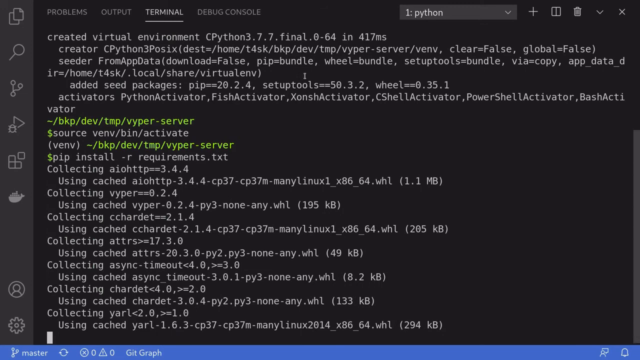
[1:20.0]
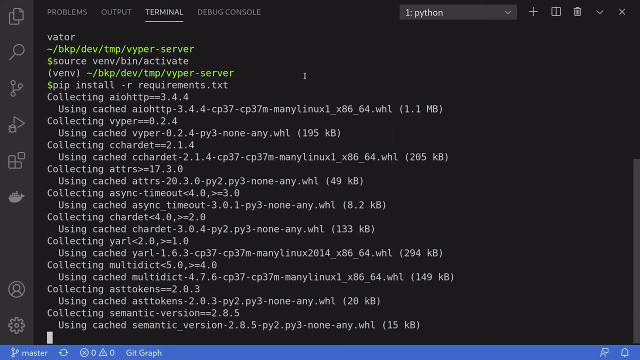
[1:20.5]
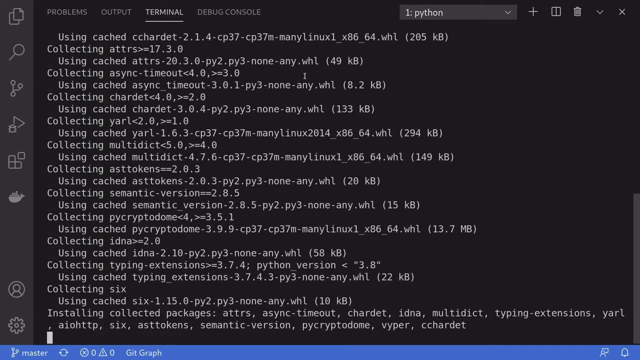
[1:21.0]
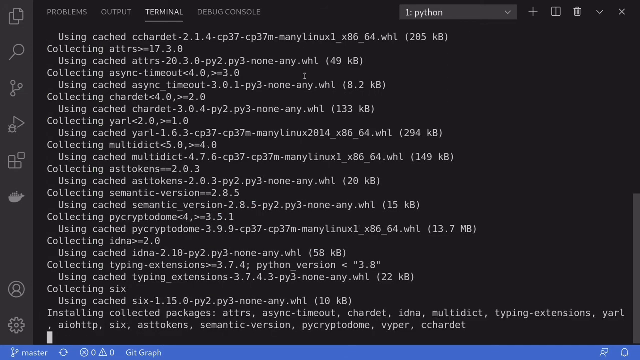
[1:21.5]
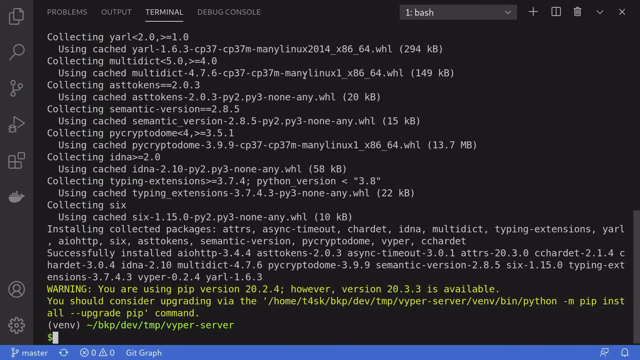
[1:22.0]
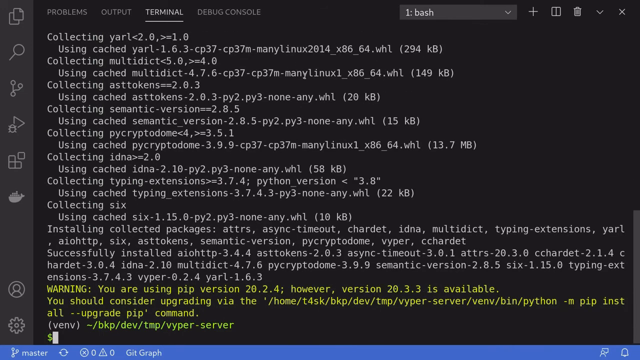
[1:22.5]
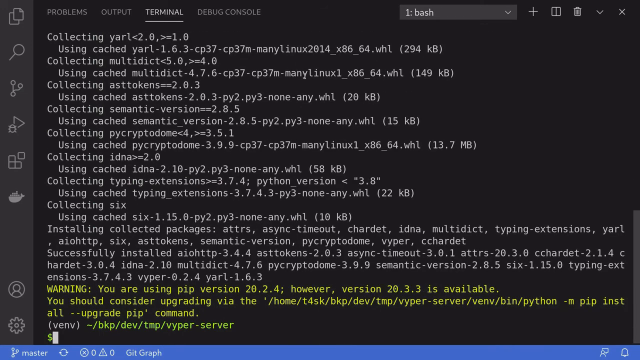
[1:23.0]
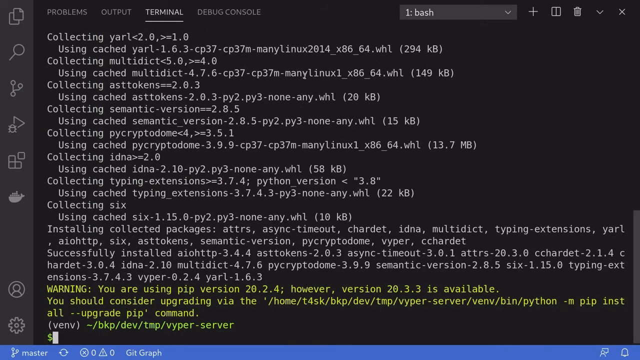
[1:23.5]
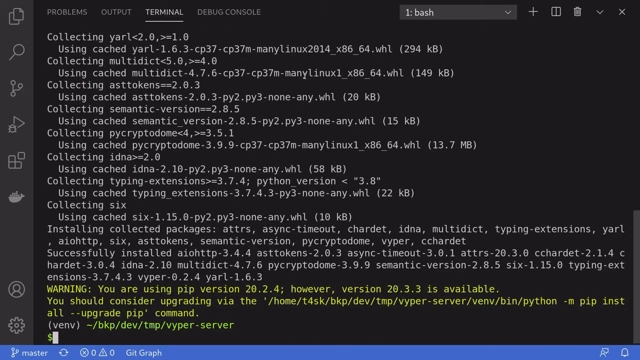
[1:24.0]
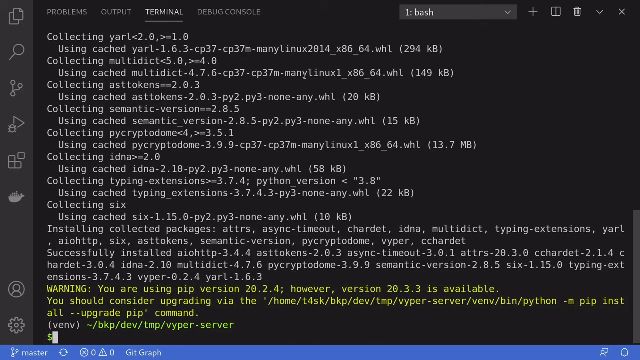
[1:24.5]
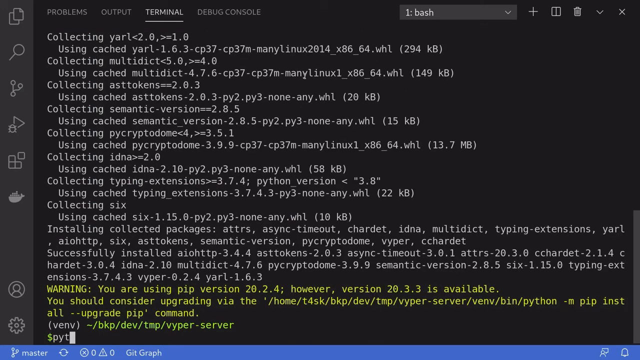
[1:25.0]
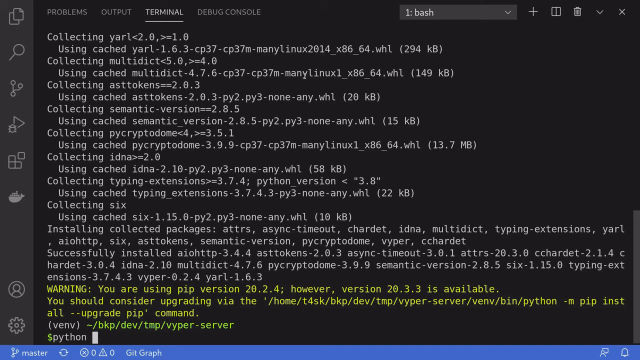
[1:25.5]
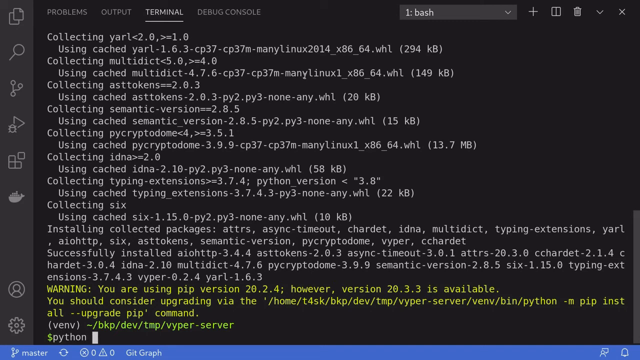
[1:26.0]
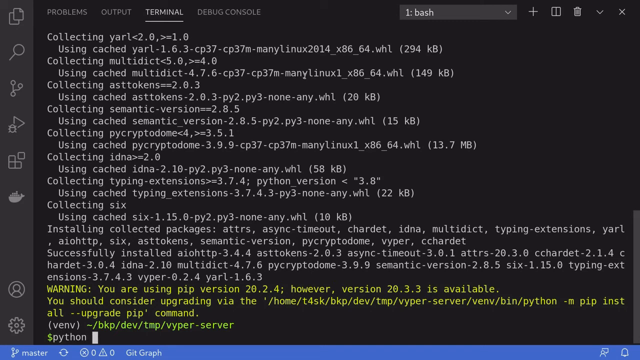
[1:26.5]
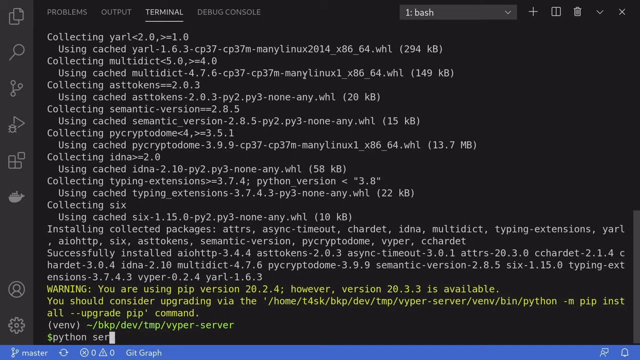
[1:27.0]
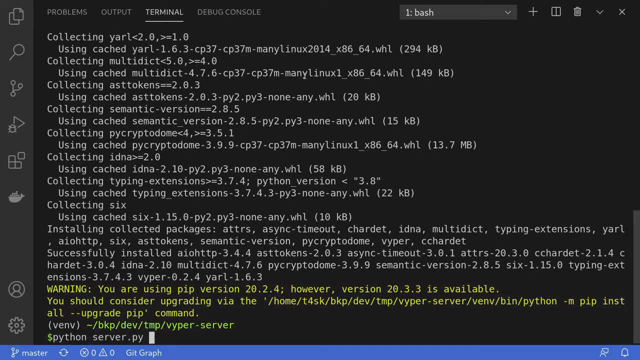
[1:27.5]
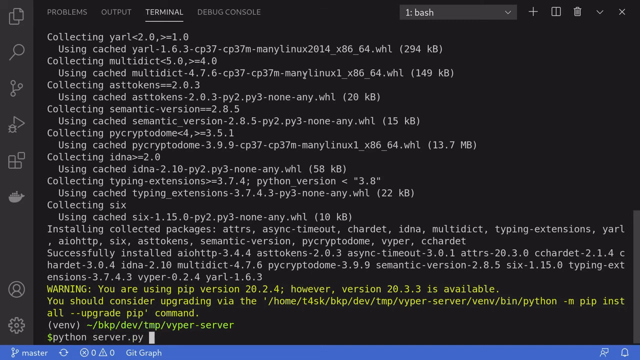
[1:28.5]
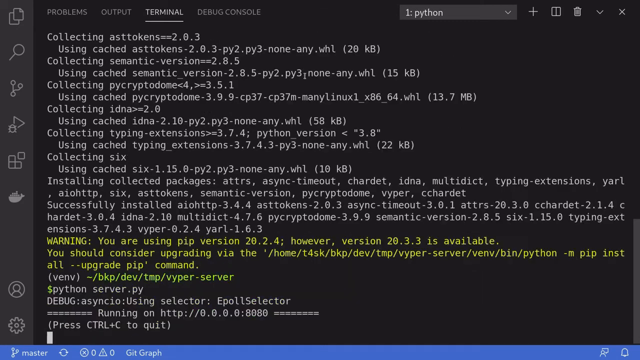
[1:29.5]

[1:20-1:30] With the Python package installed, the server is run by typing "python server.py", running the server on the system.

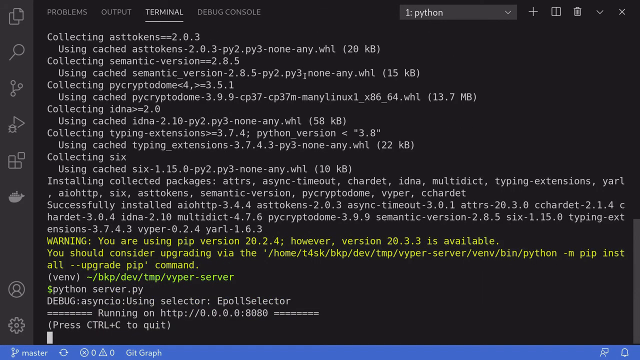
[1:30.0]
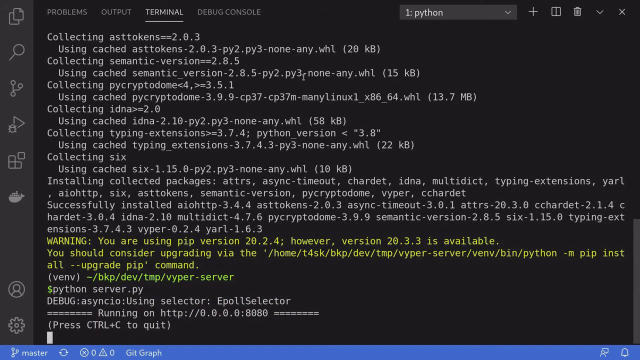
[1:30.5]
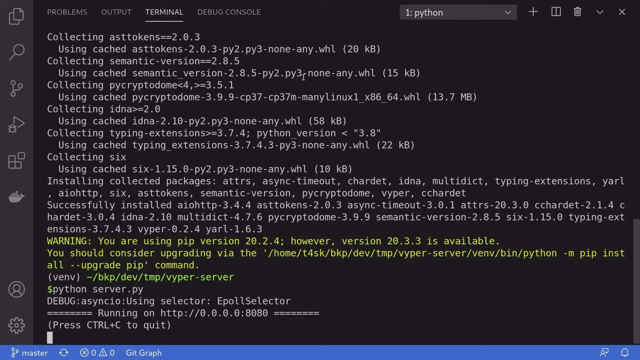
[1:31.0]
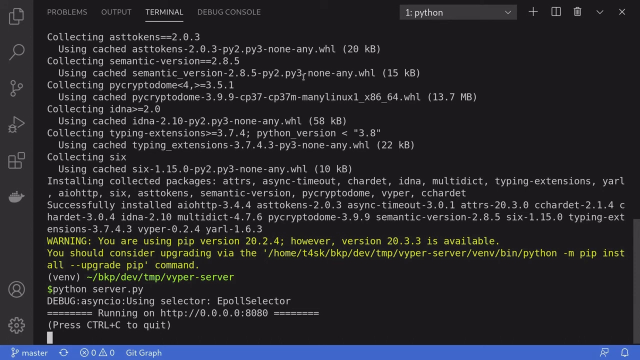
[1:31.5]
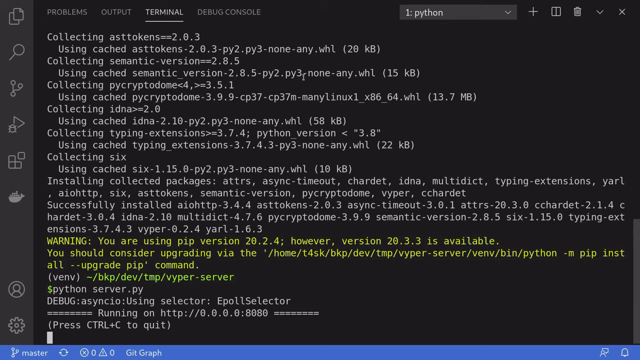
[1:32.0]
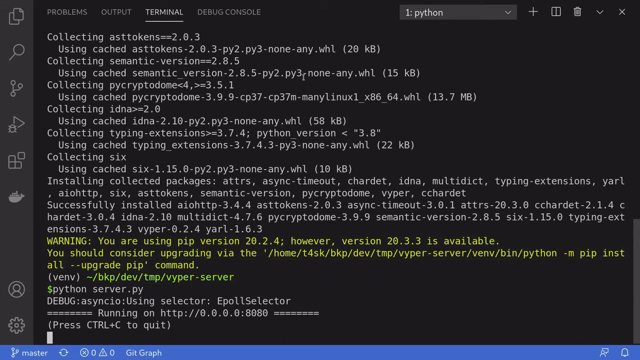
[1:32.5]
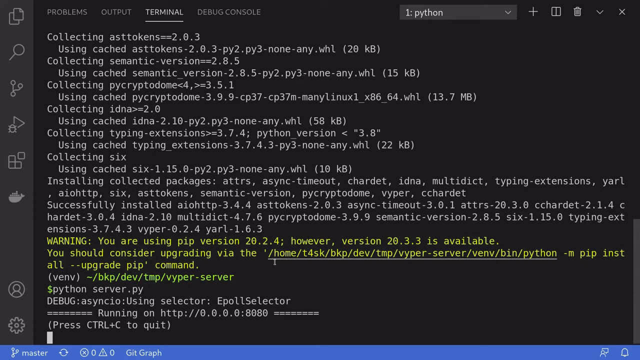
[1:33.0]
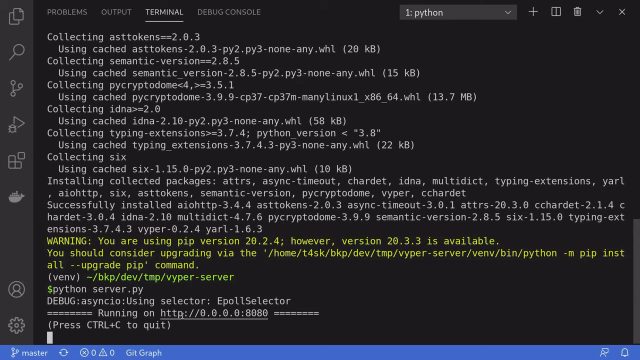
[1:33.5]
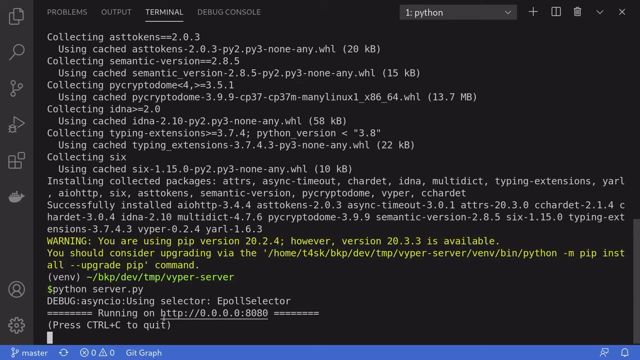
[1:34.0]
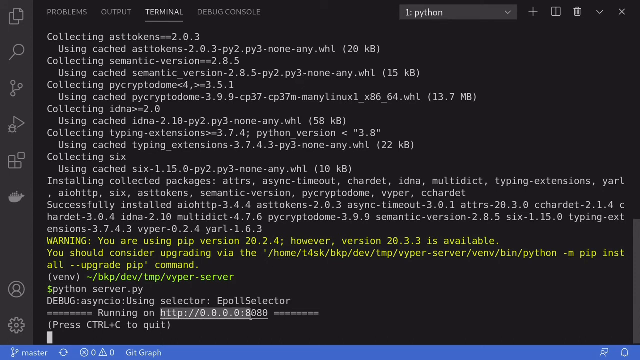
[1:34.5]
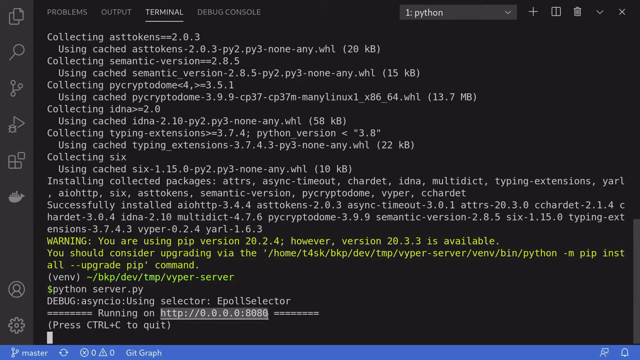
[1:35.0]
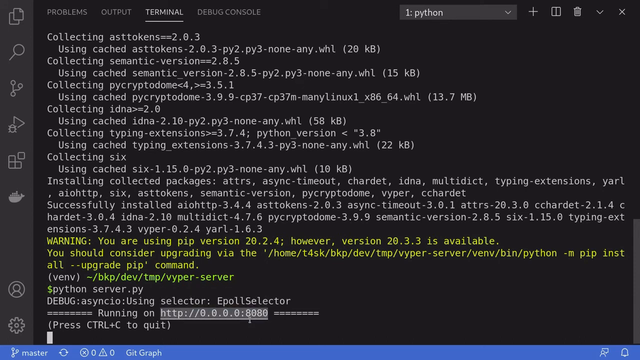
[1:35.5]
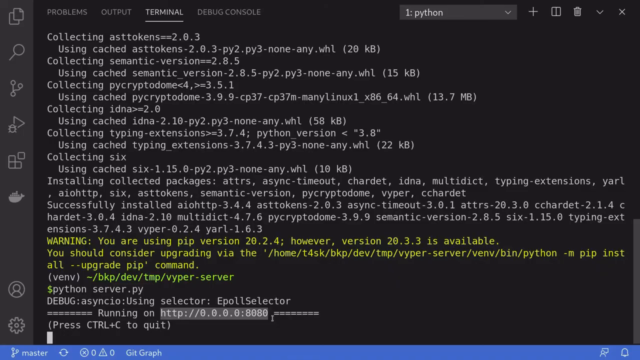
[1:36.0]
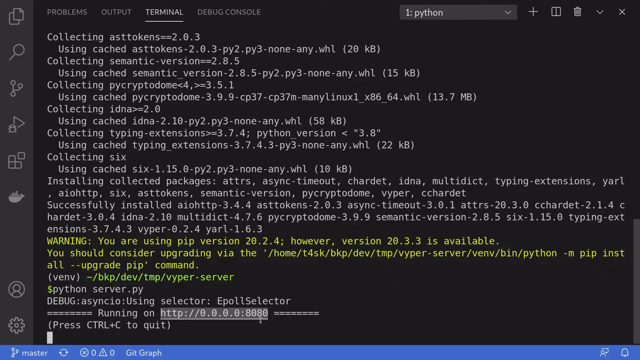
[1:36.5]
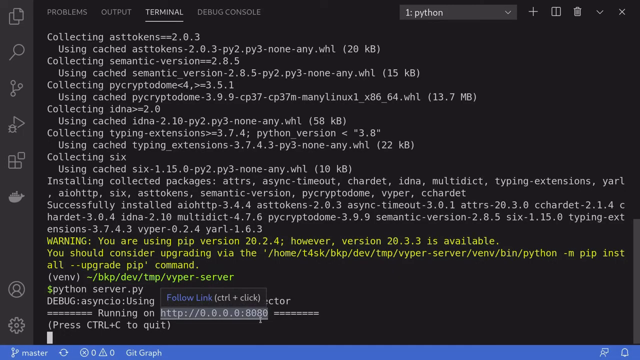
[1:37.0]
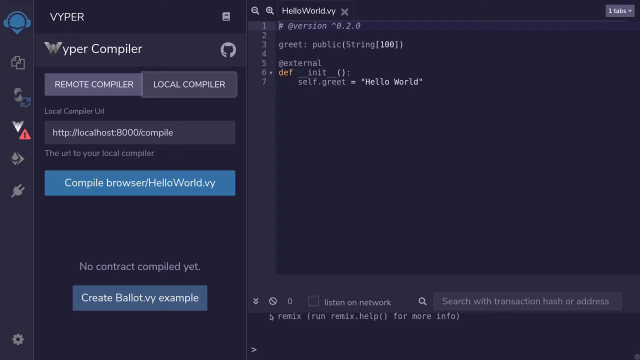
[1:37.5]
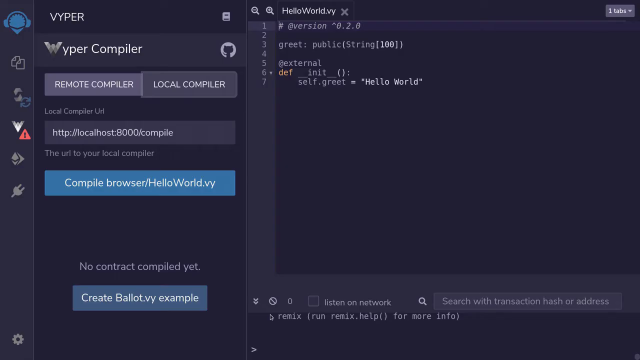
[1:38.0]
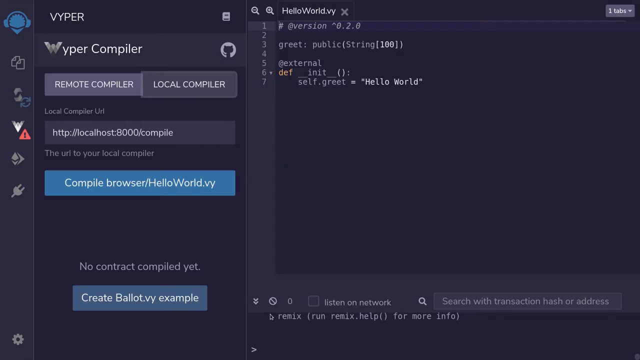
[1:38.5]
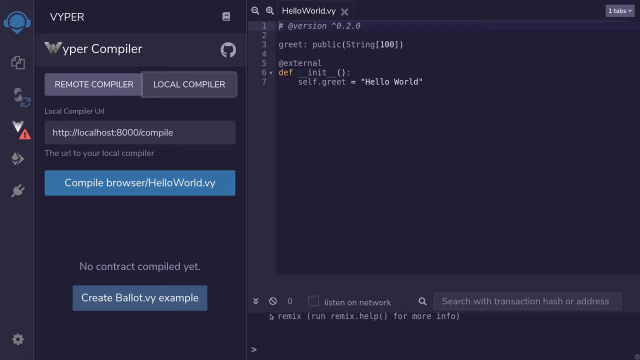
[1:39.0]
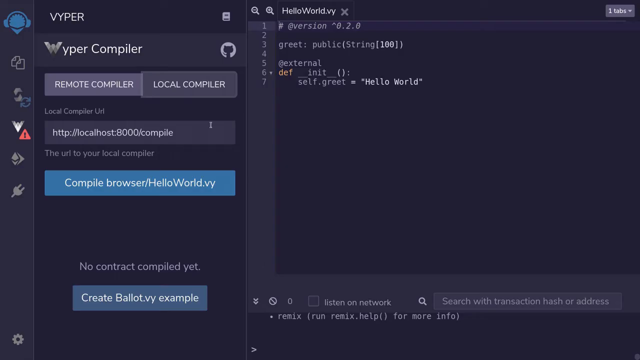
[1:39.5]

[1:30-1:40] With the Python package installed and everything set up, the server is ready to start working. The next step apparently integrates this with a compiler so they work together, using the local compiler since the remote compiler is not working, with the reminder that it does not work on anything related to environment.